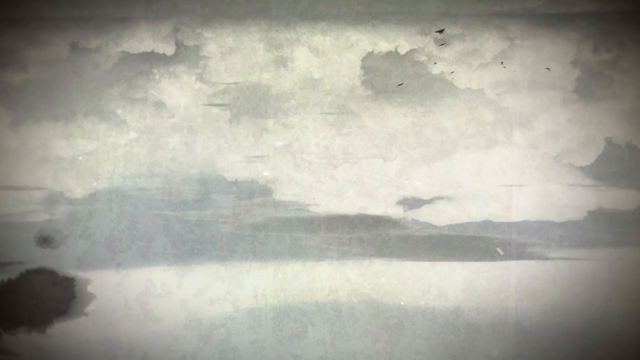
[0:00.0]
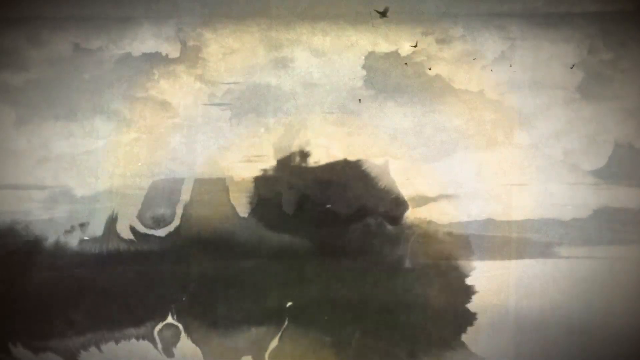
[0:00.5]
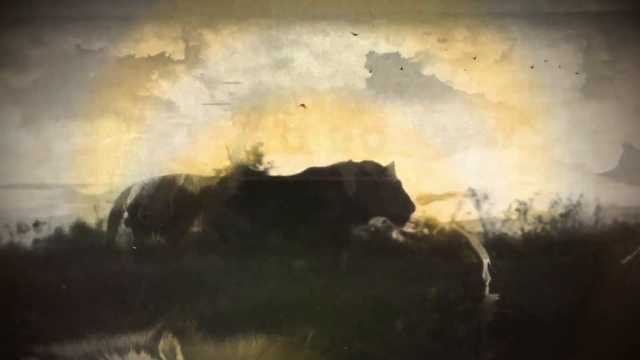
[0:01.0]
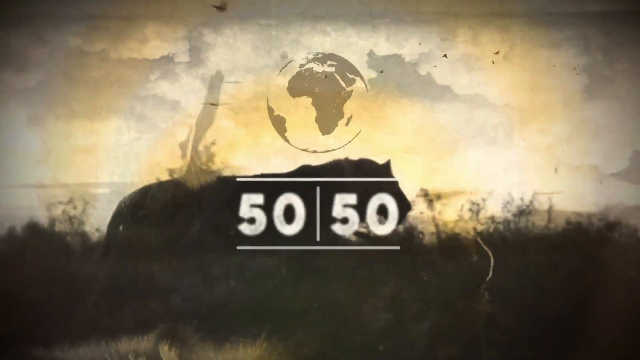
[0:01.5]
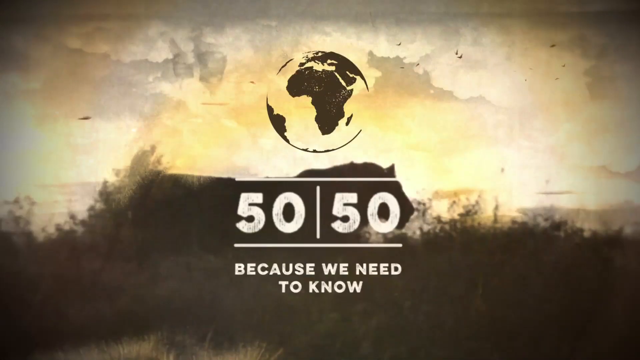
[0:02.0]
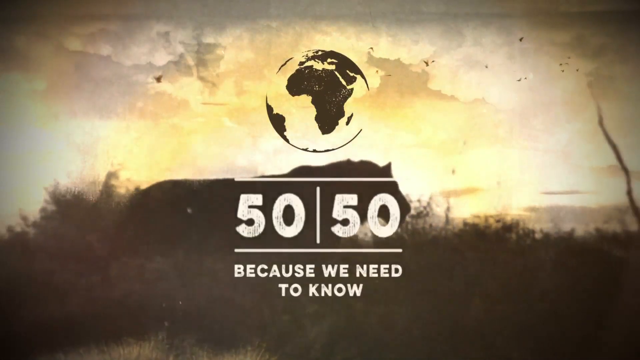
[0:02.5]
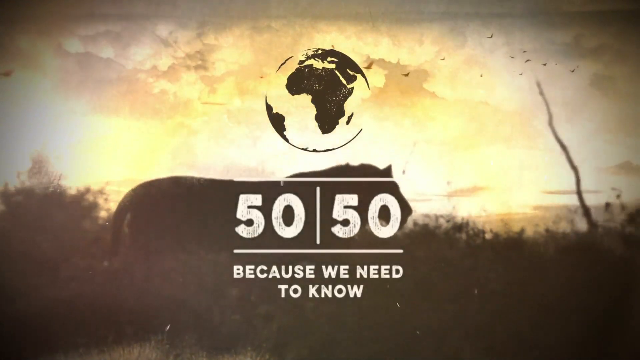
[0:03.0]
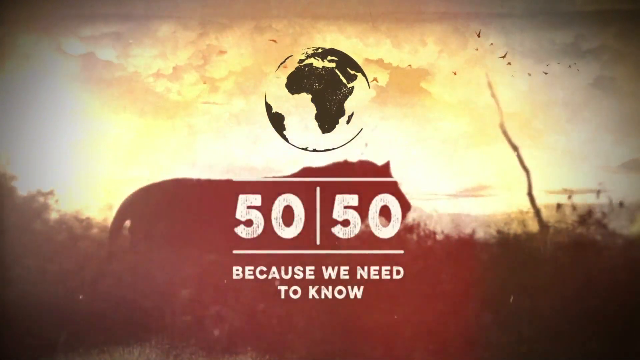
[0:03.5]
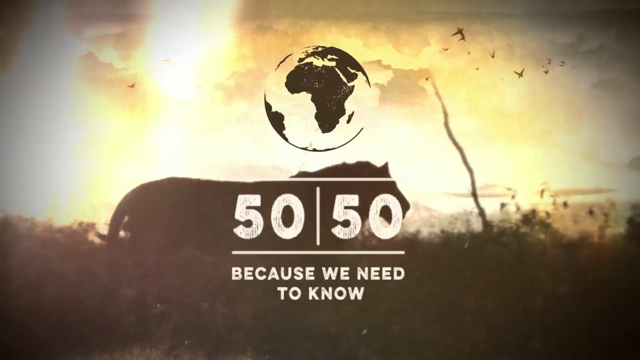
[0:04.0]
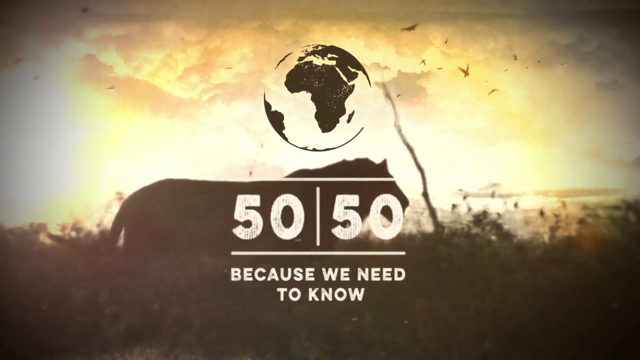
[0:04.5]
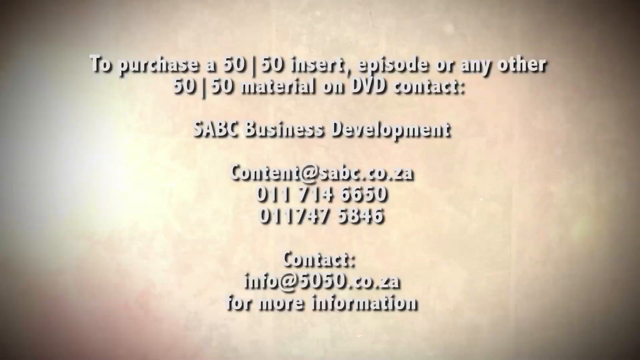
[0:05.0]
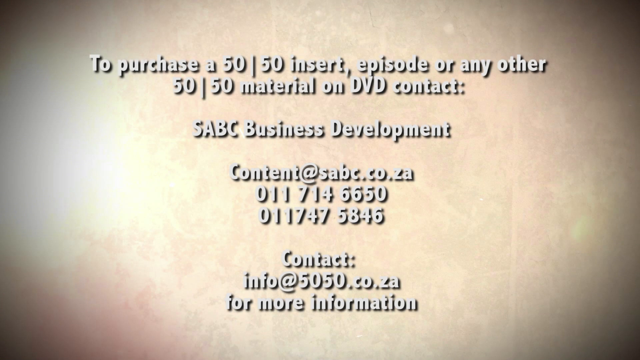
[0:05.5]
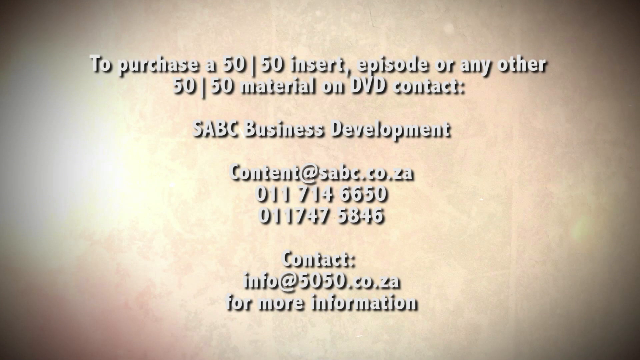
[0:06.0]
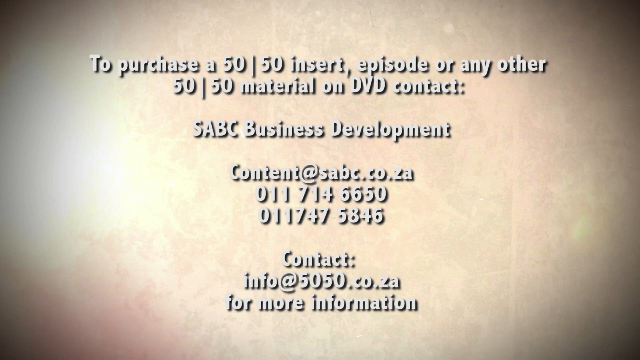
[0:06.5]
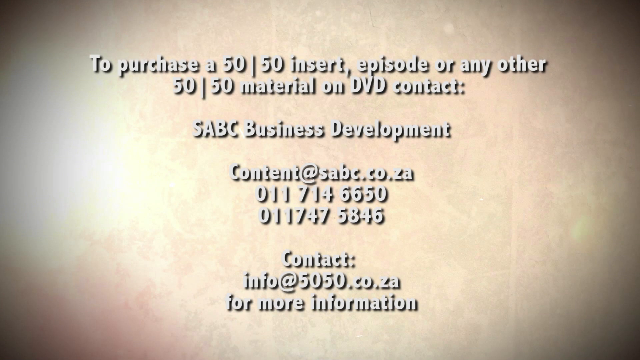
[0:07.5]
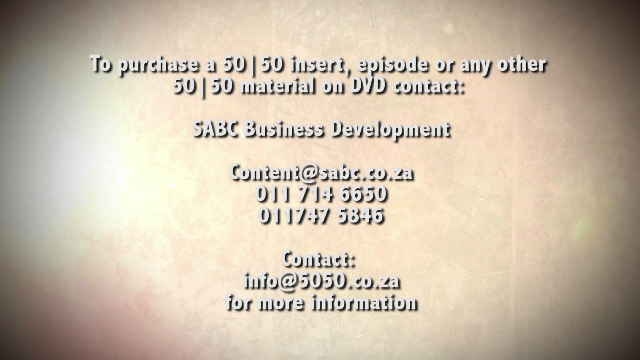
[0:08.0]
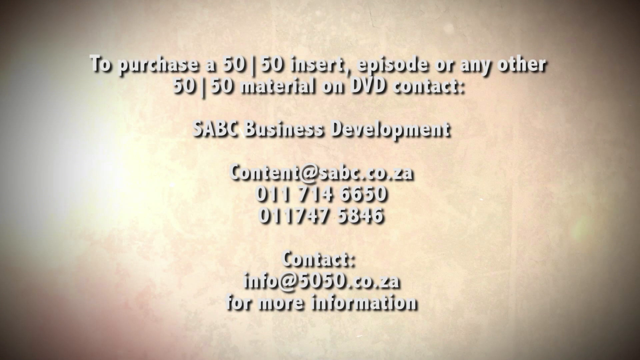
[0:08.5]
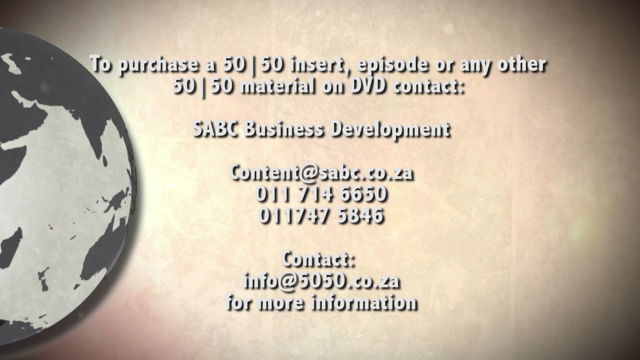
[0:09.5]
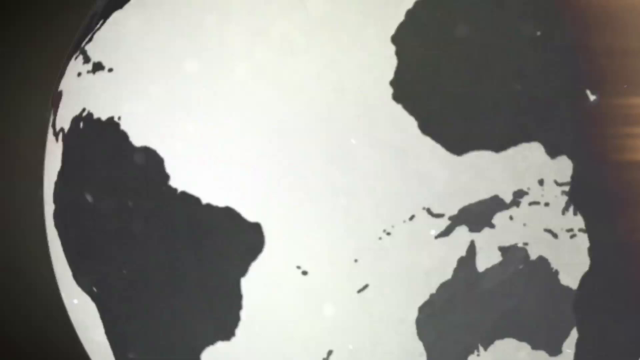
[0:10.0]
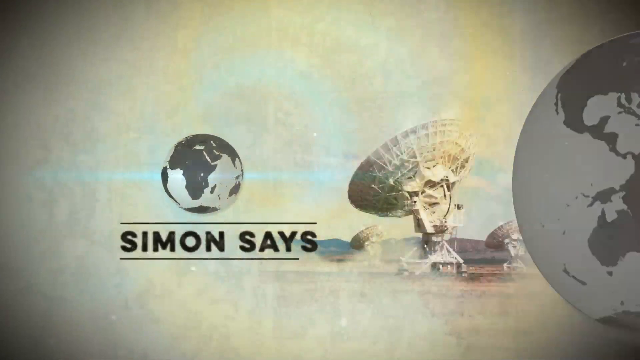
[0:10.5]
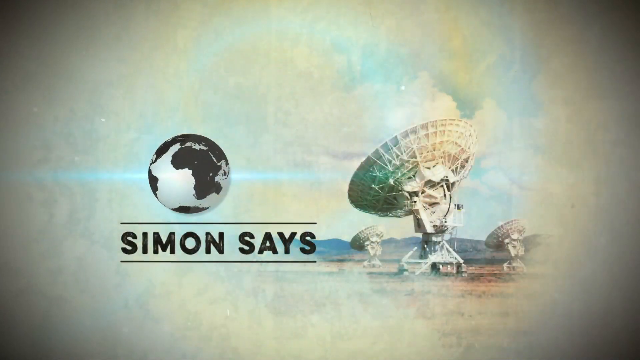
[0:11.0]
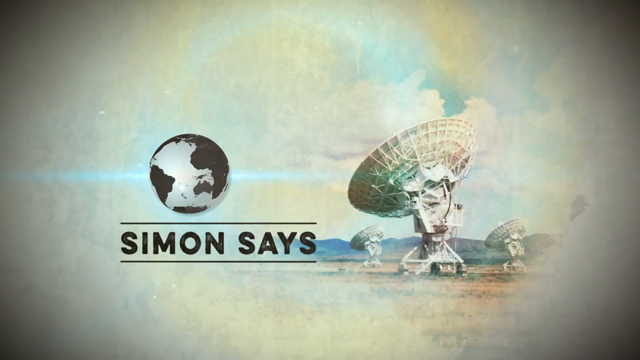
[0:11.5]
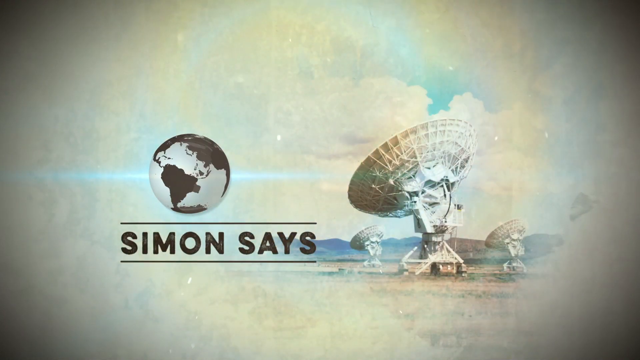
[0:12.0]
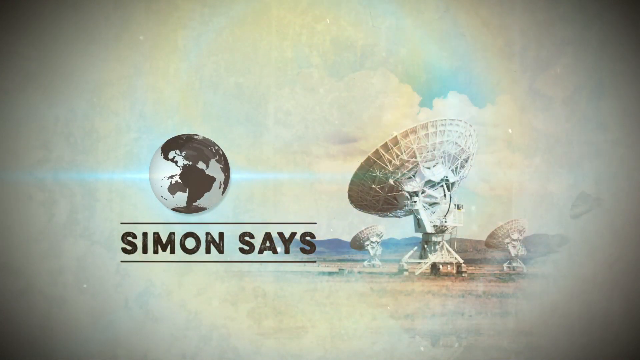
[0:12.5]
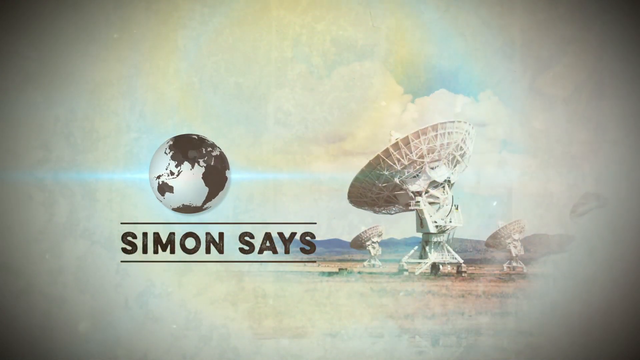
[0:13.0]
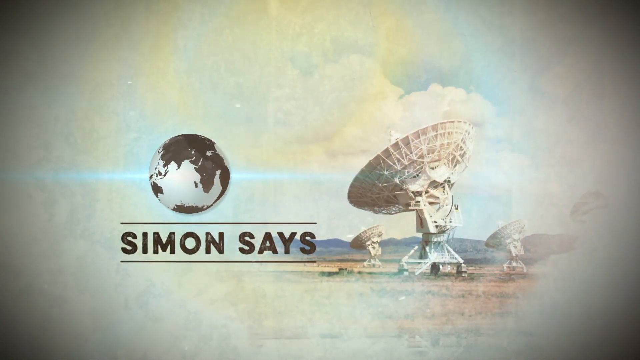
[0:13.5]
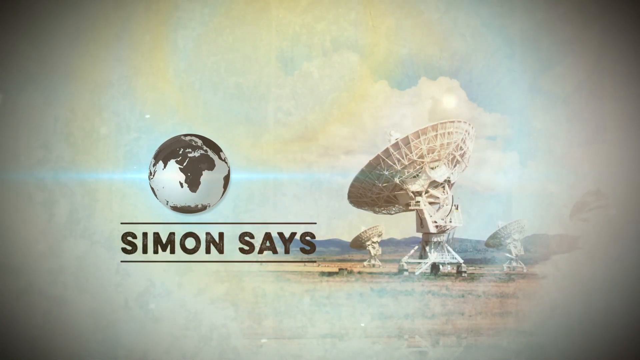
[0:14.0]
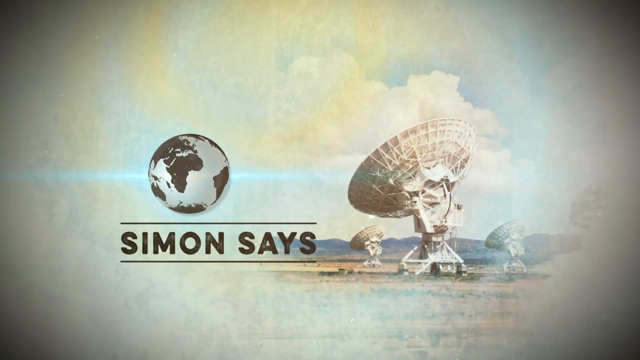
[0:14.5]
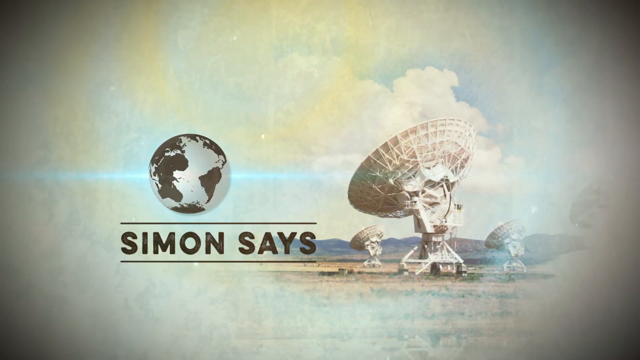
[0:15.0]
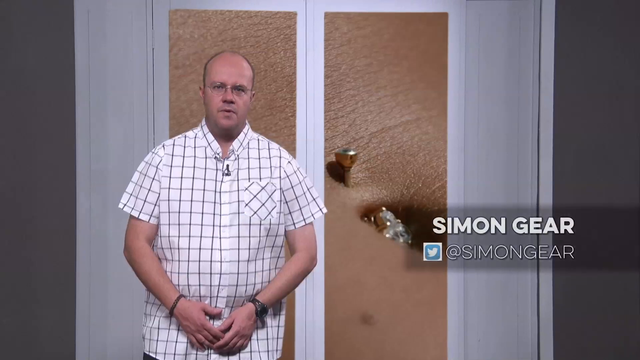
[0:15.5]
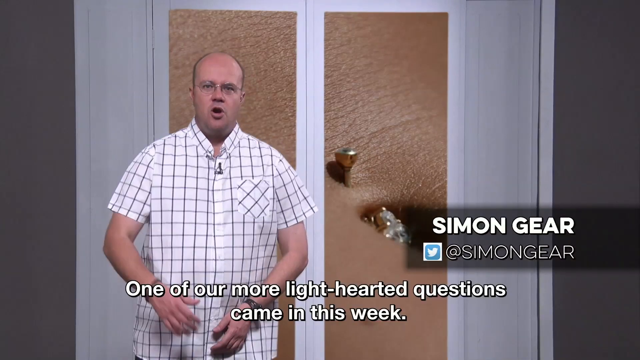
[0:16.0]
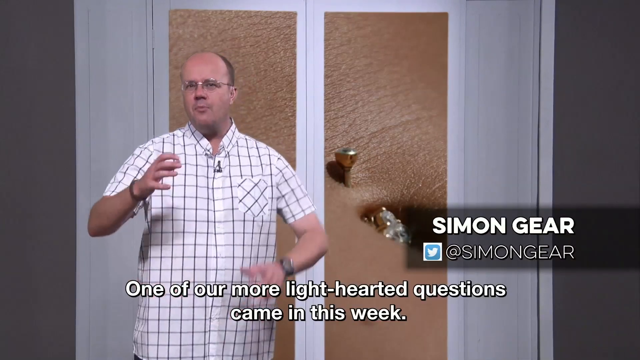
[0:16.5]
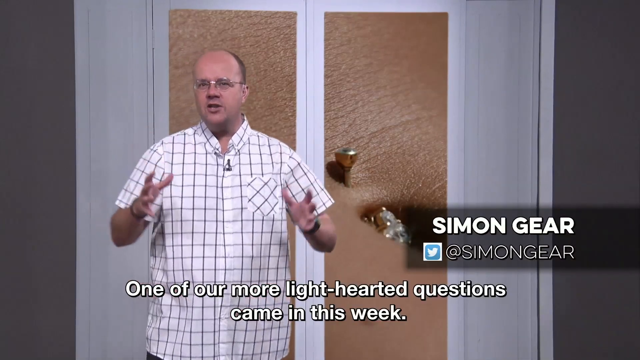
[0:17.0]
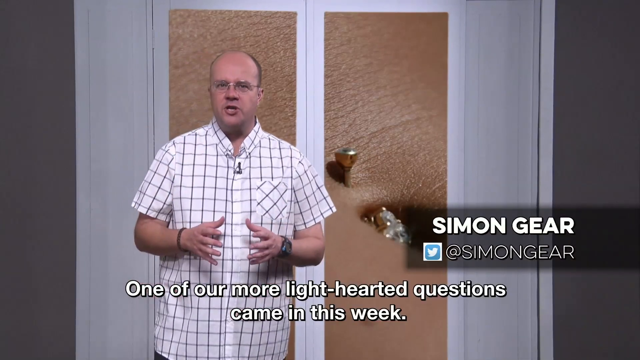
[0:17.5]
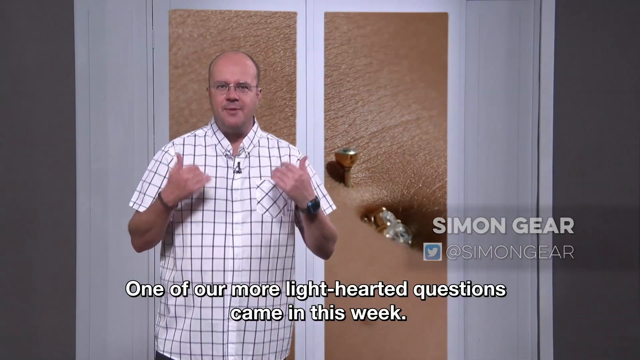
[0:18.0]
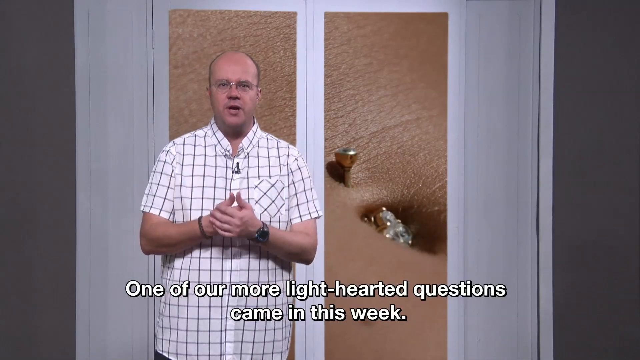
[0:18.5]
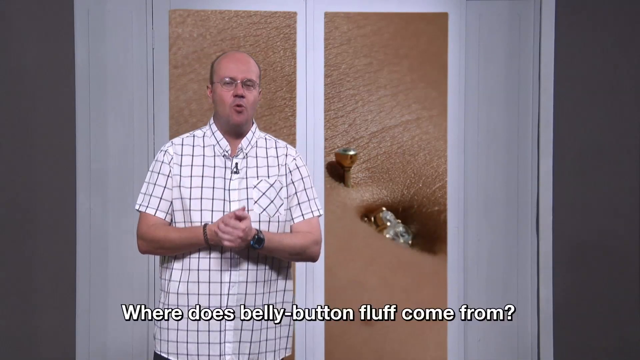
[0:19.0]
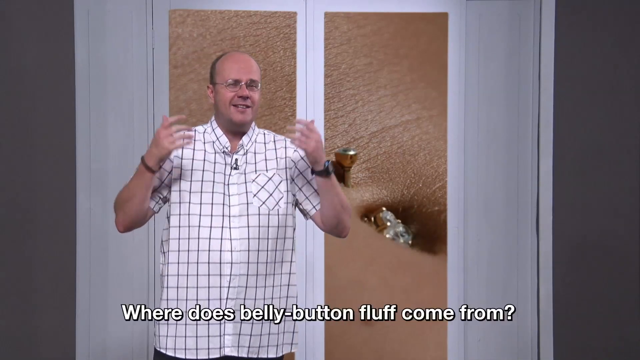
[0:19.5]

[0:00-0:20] The video opens with the title "50-50 because we need to know" over a picture of the earth, with a lion walking underneath. Text then reads "to purchase a 50-50 insert episode or any other 50-50 material on DVD contact sabc business development" along with contact information, followed by "Simon says." A picture of several gigantic satellite dishes appears. Then Simon Gere is shown, and he says, "one of our more lighthearted questions came in this week. Where does belly button fluff come from?"